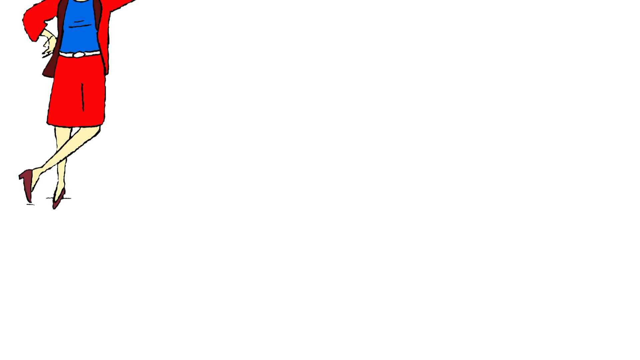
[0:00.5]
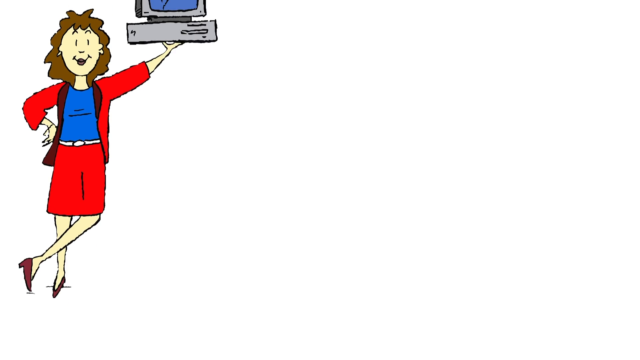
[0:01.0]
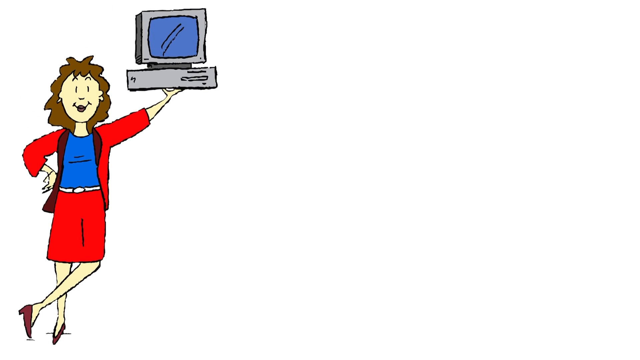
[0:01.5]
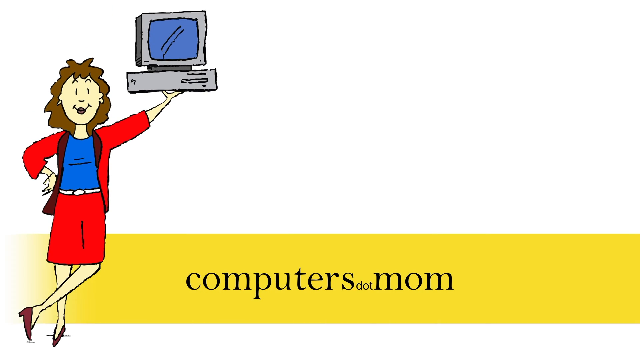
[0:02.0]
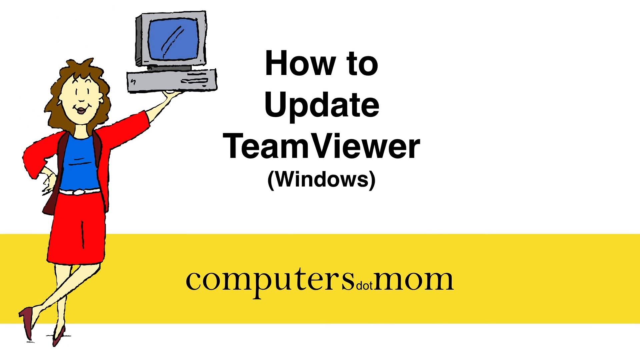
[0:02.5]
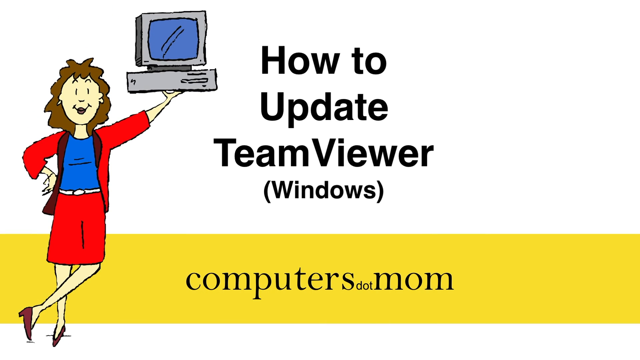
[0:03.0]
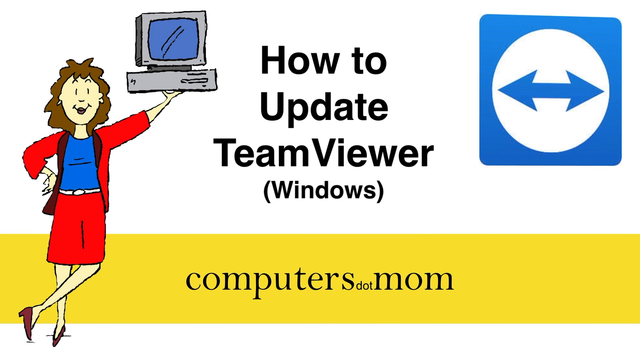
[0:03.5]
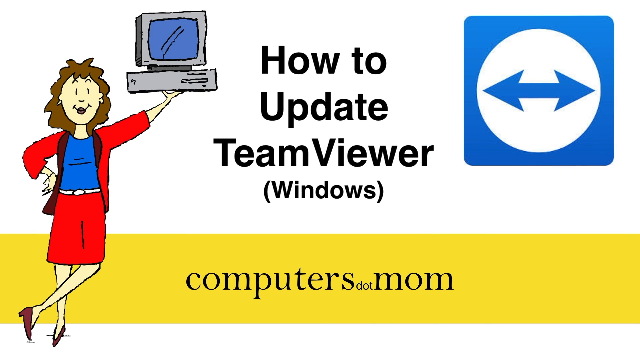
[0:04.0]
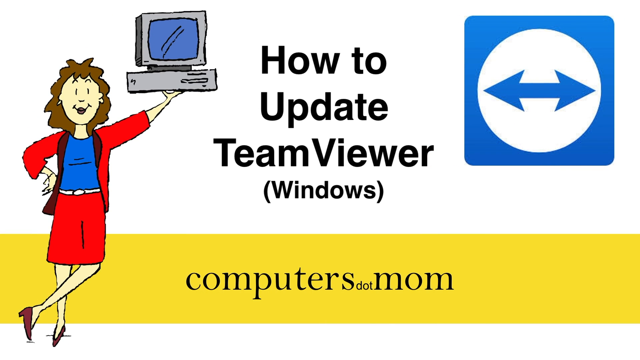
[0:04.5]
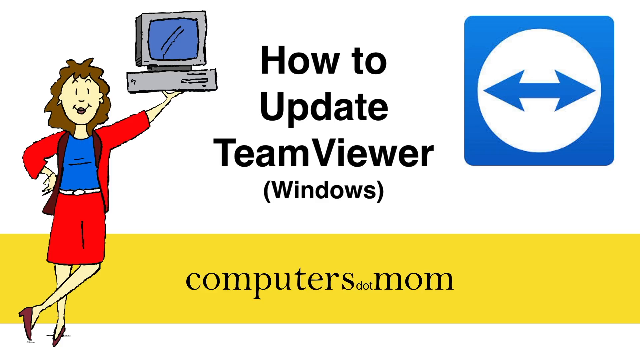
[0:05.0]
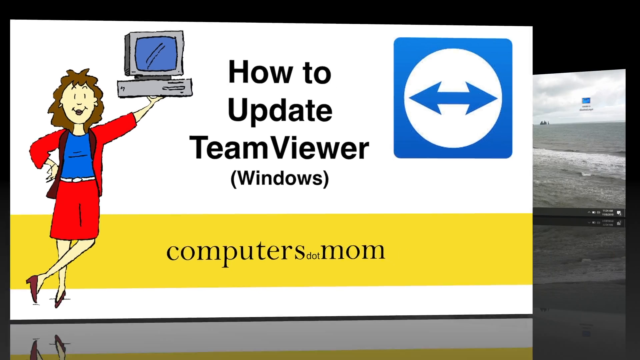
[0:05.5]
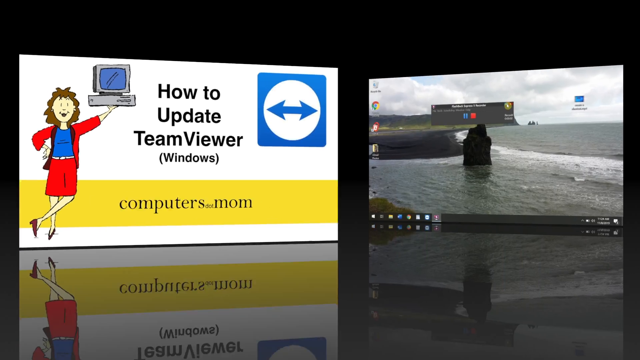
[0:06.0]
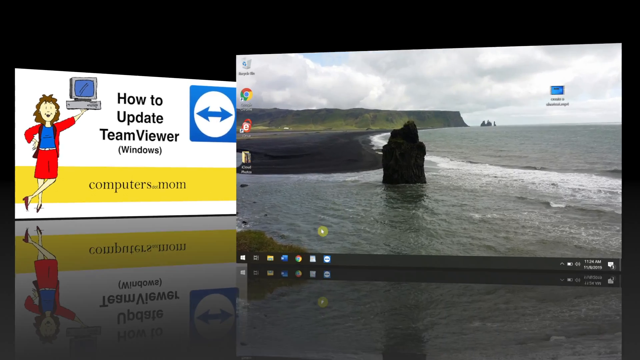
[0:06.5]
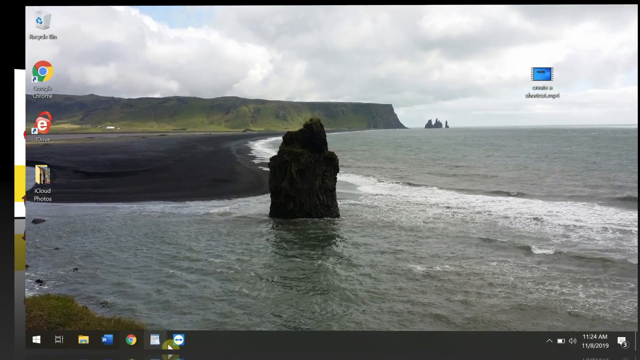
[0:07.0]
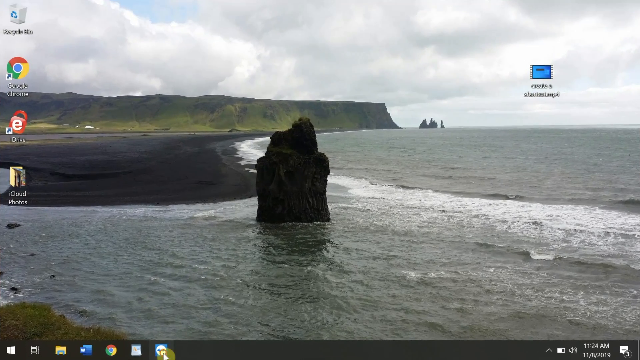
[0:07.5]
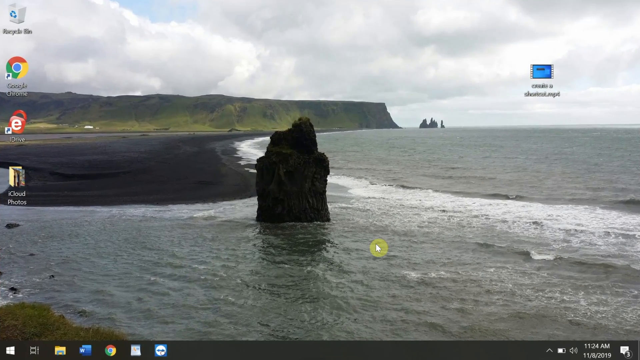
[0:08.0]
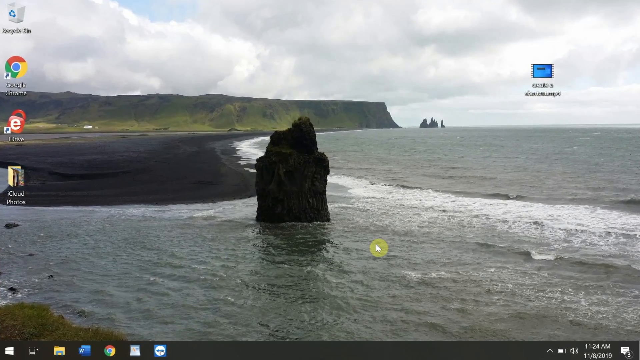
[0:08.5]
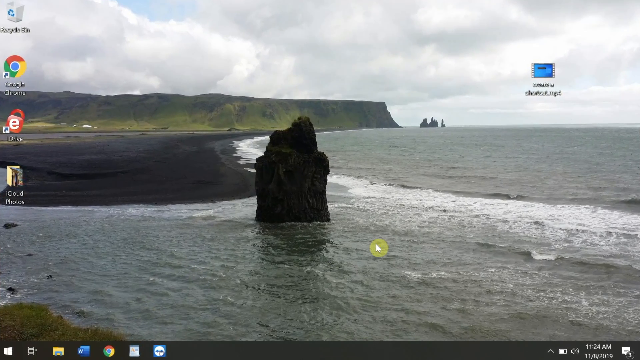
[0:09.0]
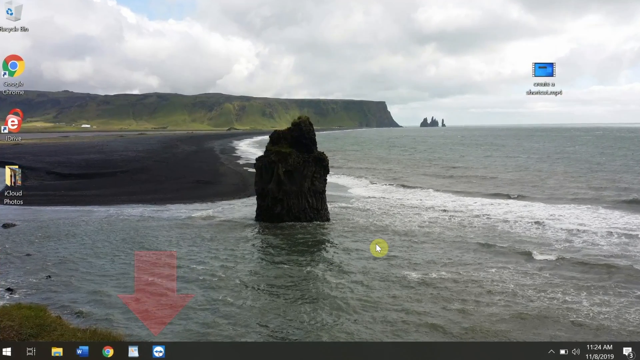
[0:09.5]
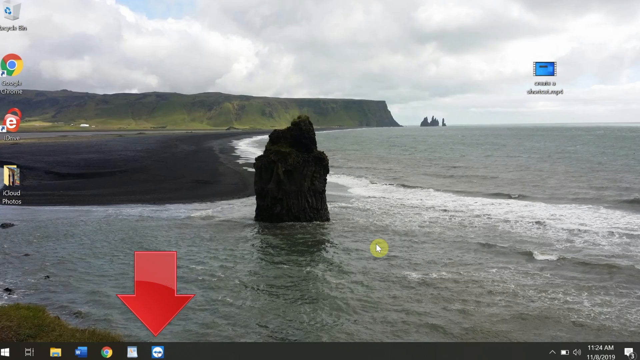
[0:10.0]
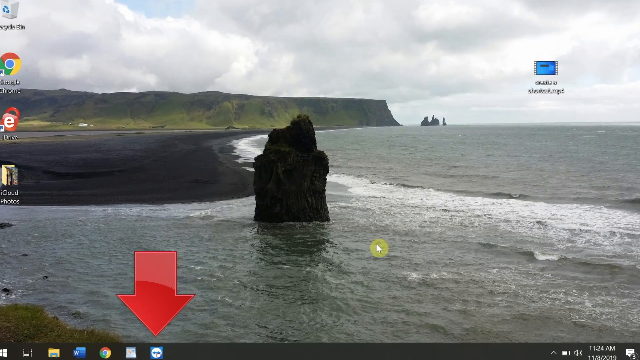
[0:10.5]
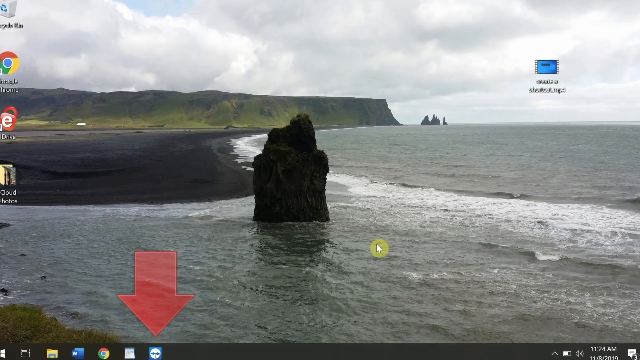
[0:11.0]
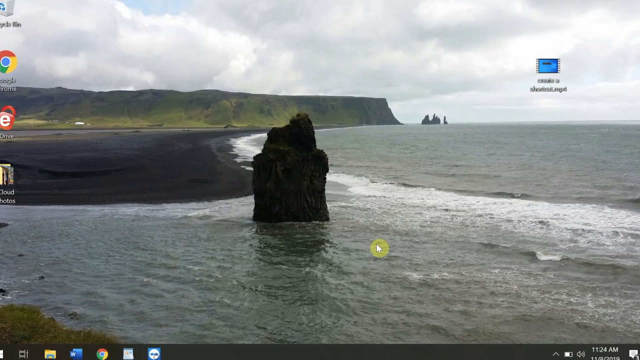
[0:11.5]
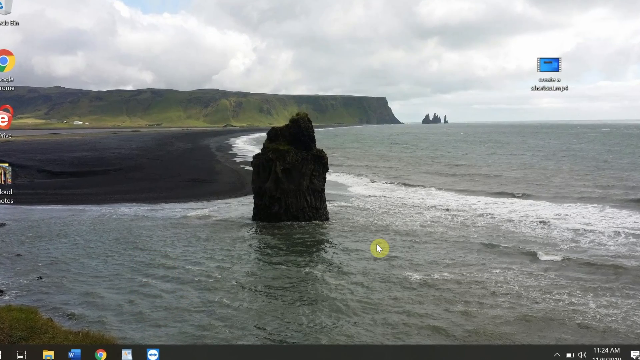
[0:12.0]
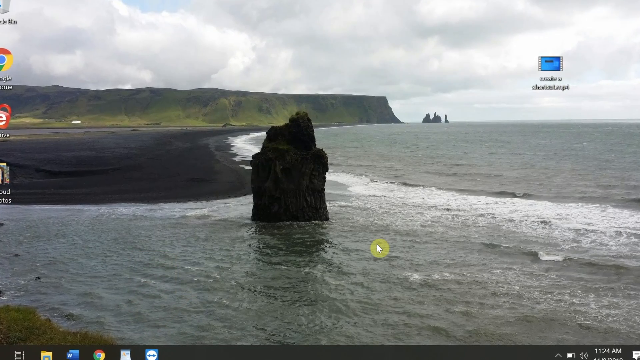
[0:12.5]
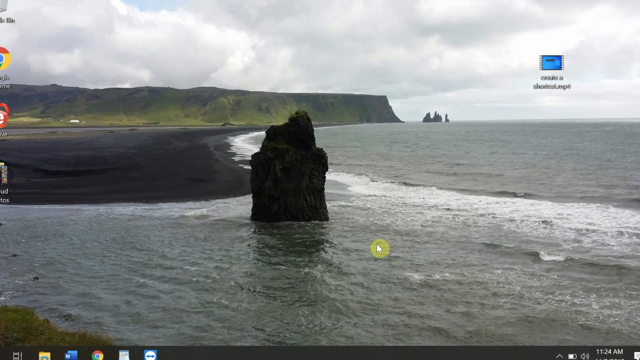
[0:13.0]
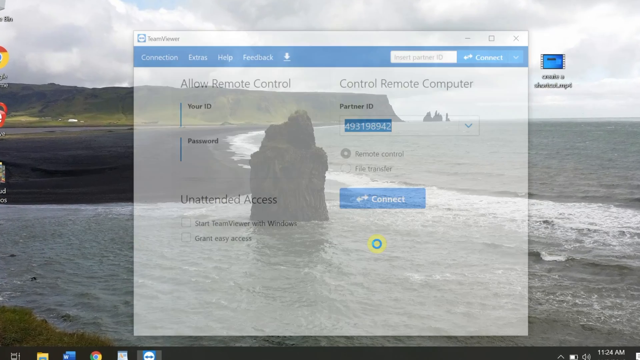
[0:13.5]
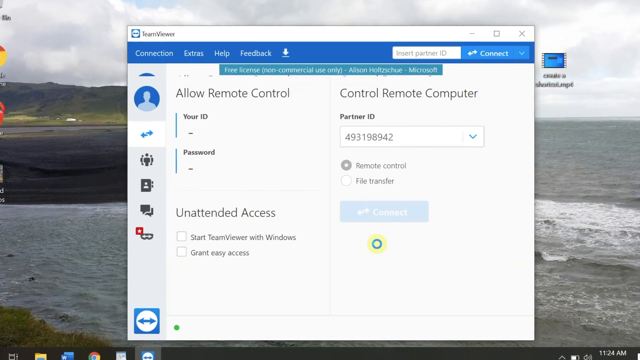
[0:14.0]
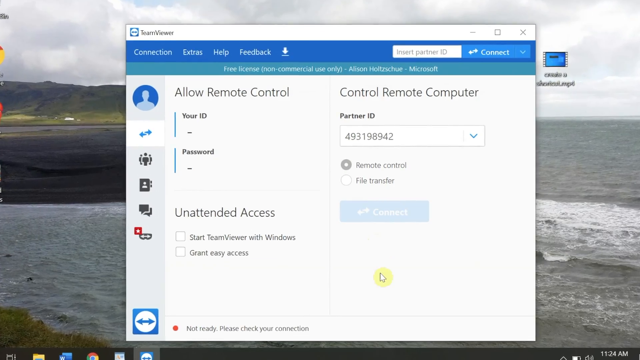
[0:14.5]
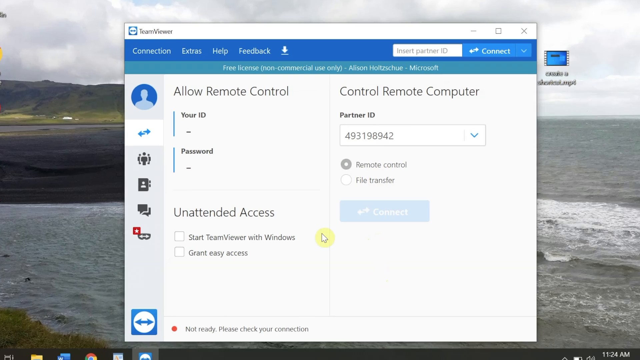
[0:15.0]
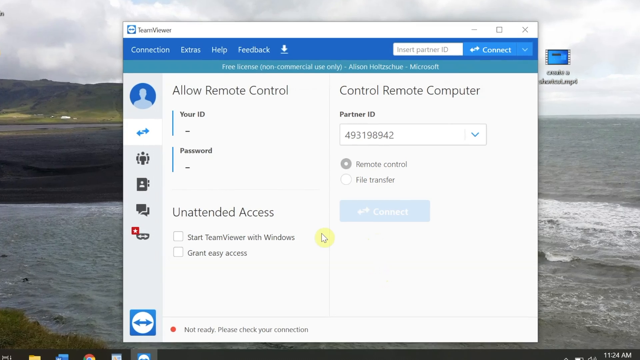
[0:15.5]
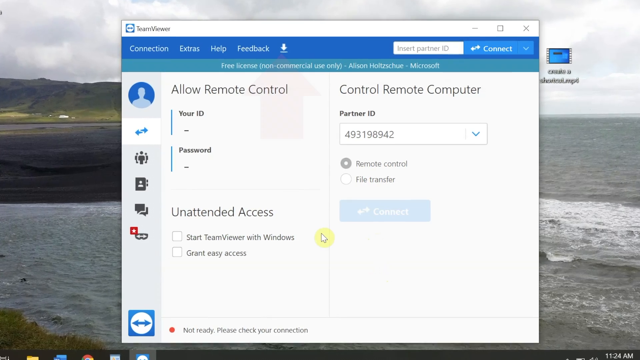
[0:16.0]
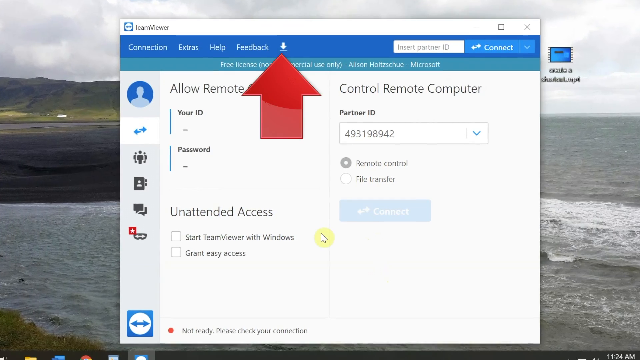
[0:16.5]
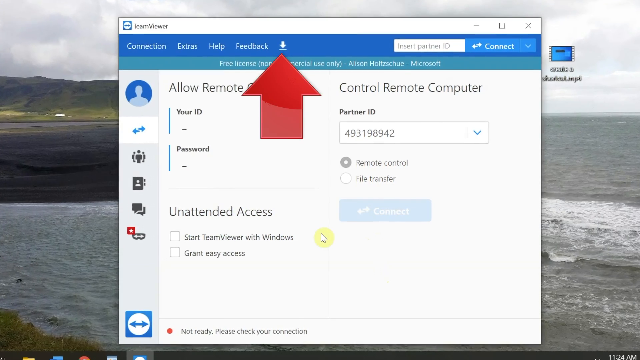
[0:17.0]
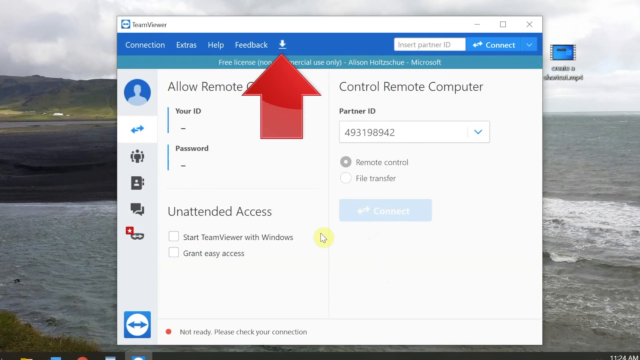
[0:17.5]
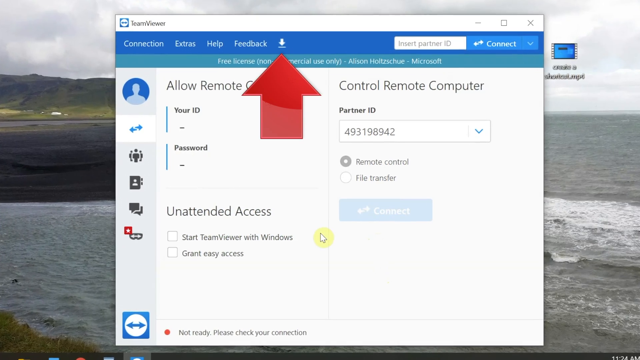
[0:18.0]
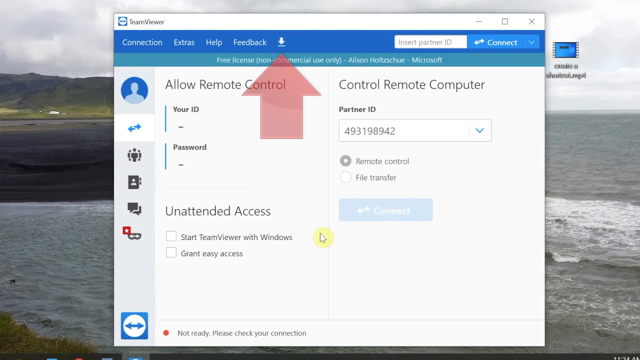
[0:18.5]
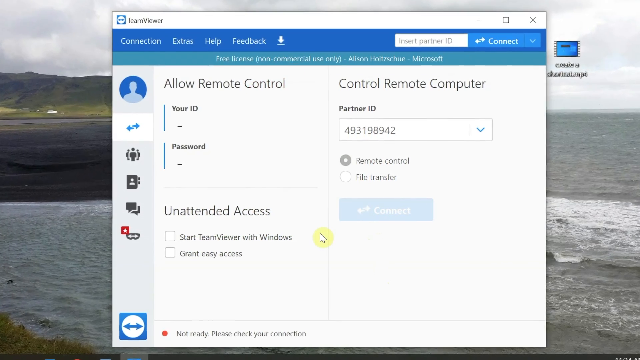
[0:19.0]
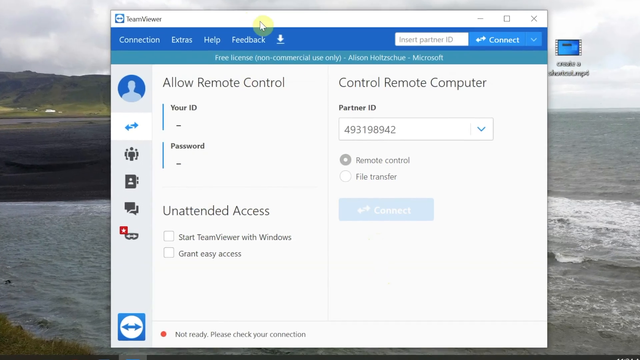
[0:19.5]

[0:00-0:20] A cartoon picture shows a woman in a red skirt and jacket with her hand on her hip, holding up a computer monitor. A blue double-sided arrow over a white circle is encased in a blue square, and at the bottom a yellow banner says "computers.mom". The title is "how to update TeamViewer for Windows". The blue arrow shakes, then that screen shrinks and a Windows computer screen slides into view so the two are side by side, sitting on a reflective surface. The Windows screen then fills the page, showing a cliffside screensaver with a rock standing out of the ocean in the middle. The cursor slides into the screen, illuminated with a yellow dot. A red arrow points downward and TeamViewer pops up onto the screen. A big red arrow points to an arrow pointing down in the middle of the top, and they click on it.